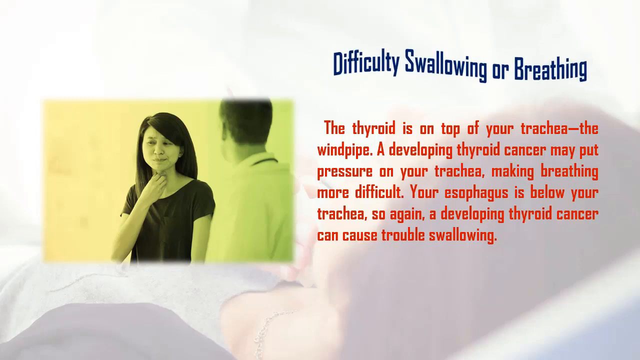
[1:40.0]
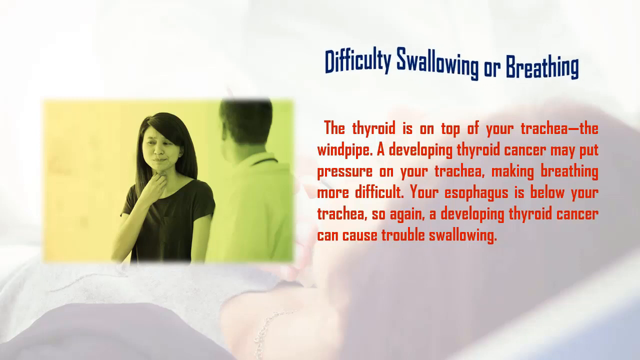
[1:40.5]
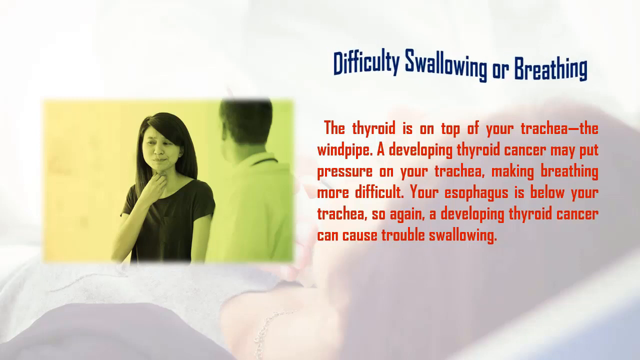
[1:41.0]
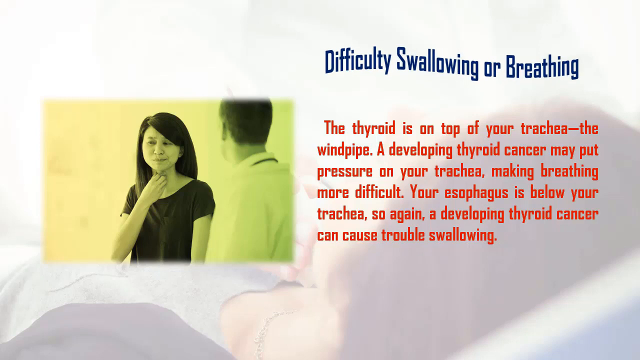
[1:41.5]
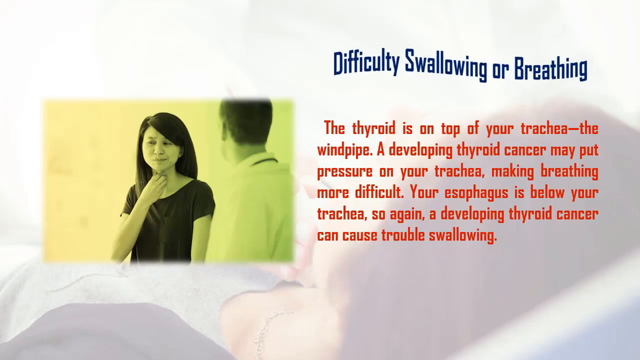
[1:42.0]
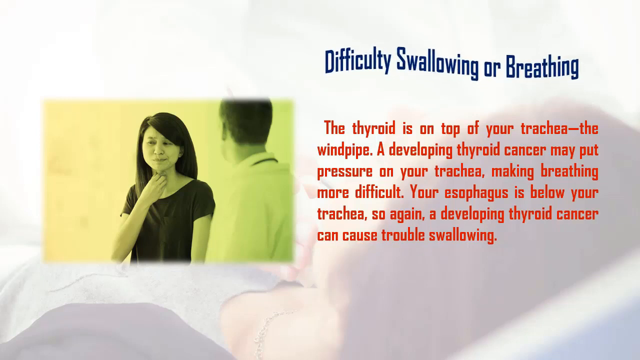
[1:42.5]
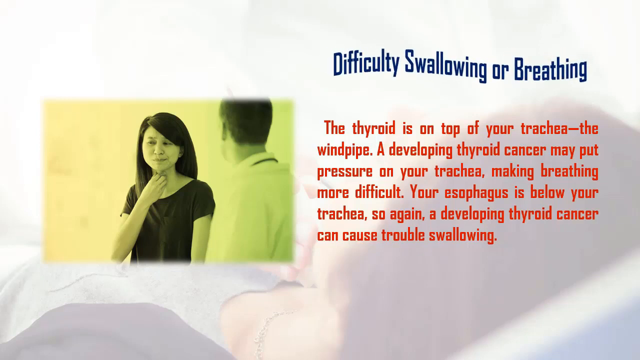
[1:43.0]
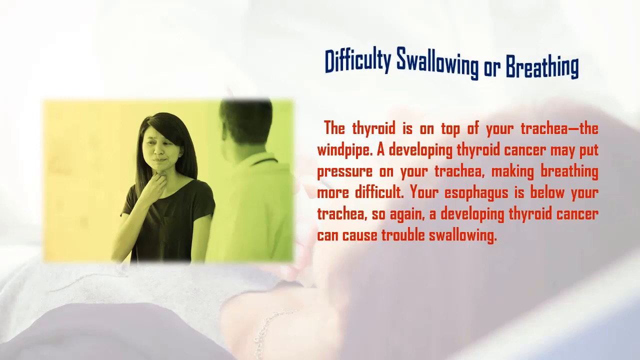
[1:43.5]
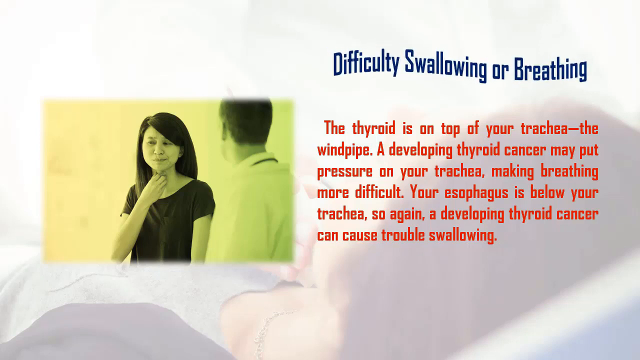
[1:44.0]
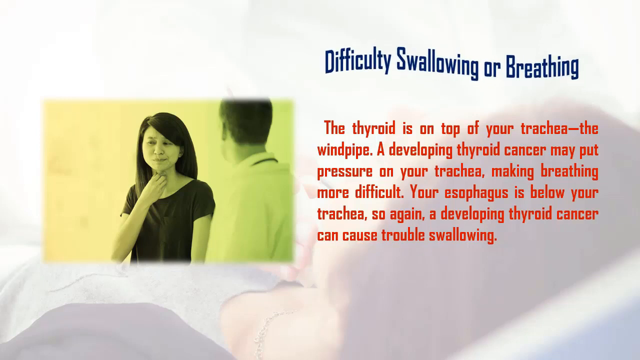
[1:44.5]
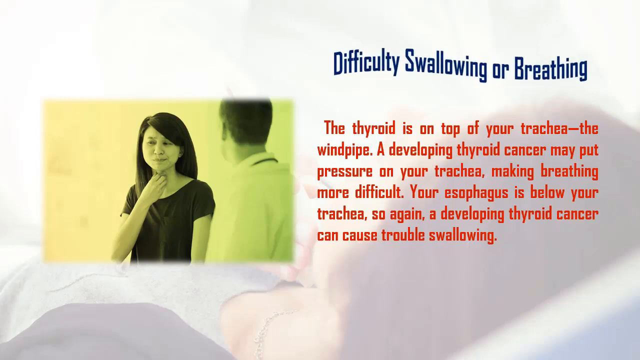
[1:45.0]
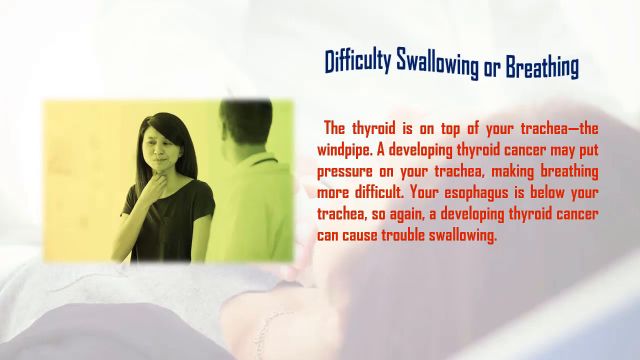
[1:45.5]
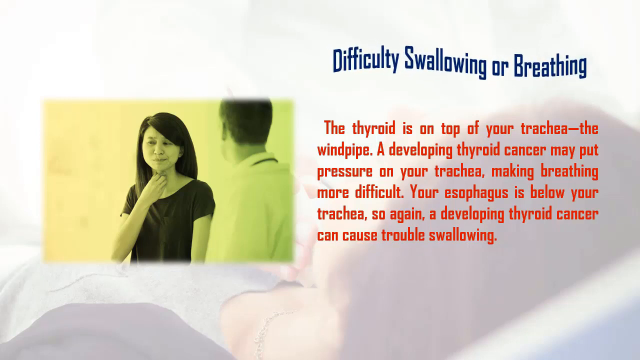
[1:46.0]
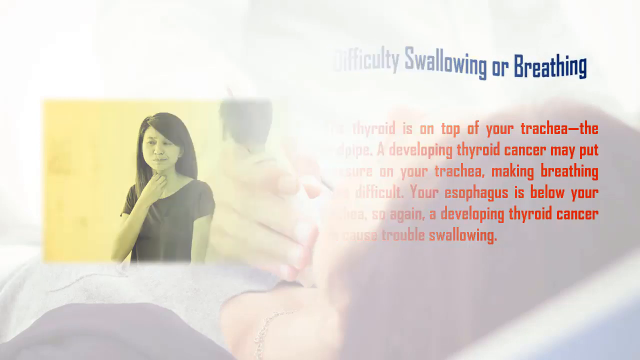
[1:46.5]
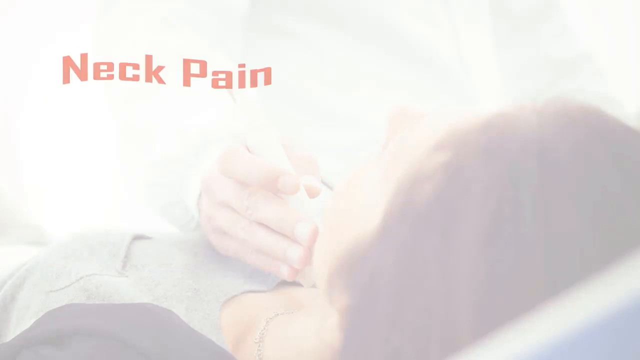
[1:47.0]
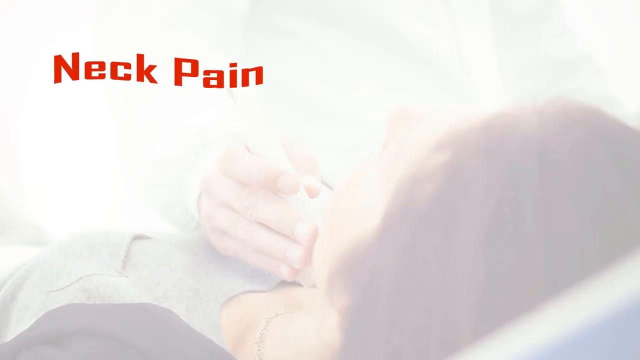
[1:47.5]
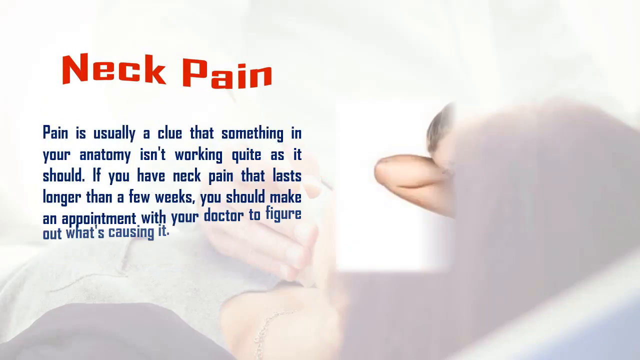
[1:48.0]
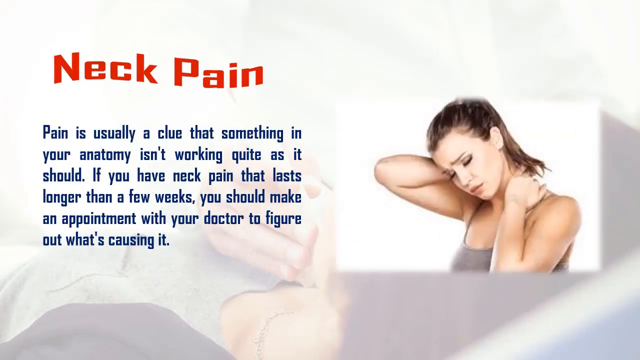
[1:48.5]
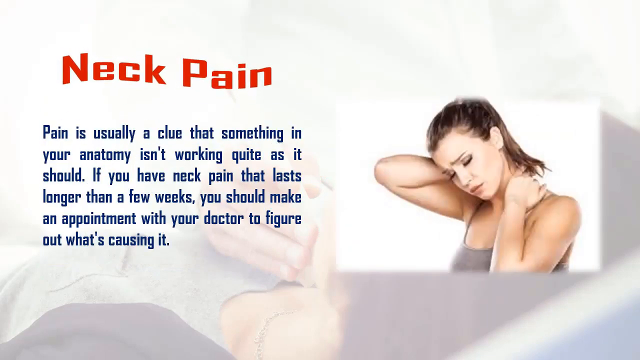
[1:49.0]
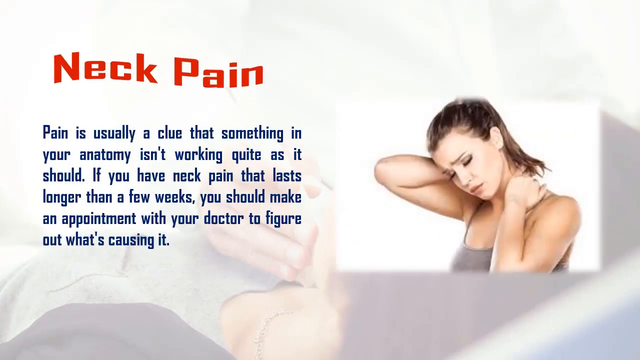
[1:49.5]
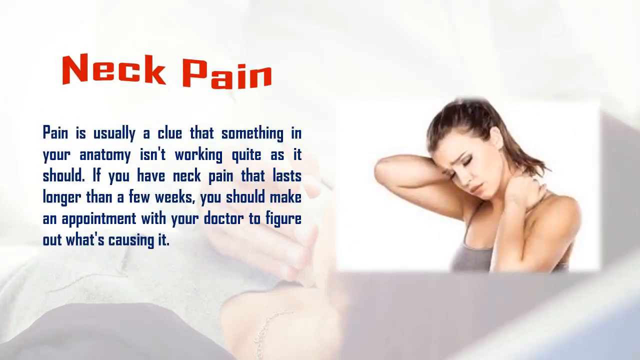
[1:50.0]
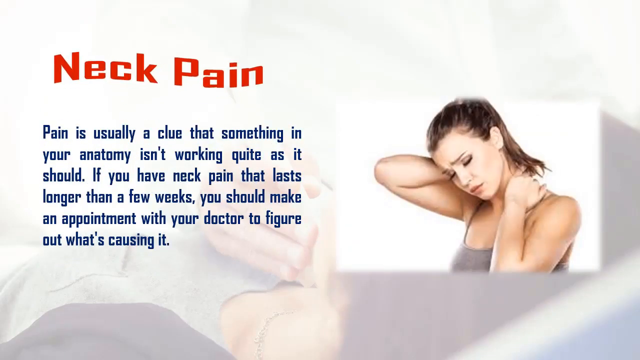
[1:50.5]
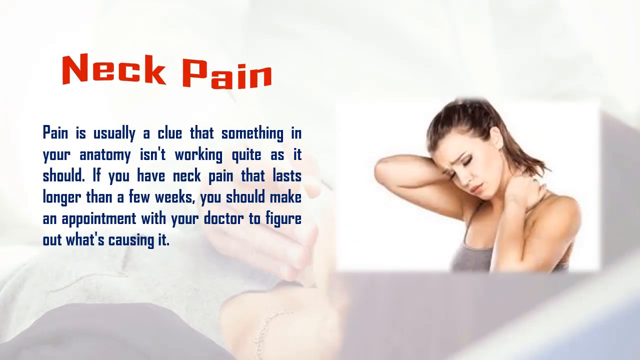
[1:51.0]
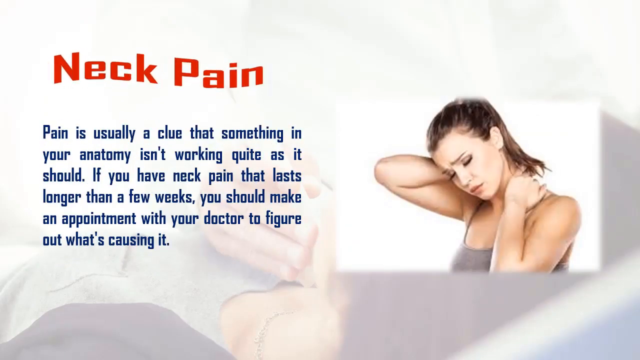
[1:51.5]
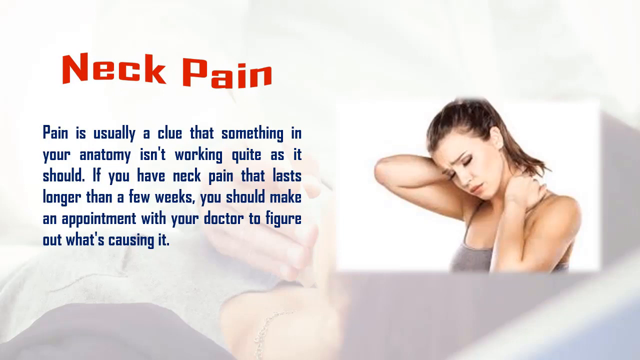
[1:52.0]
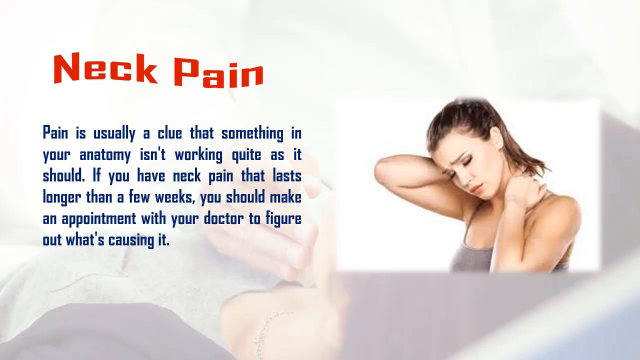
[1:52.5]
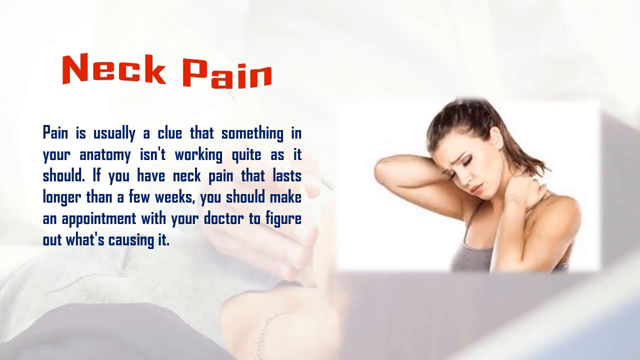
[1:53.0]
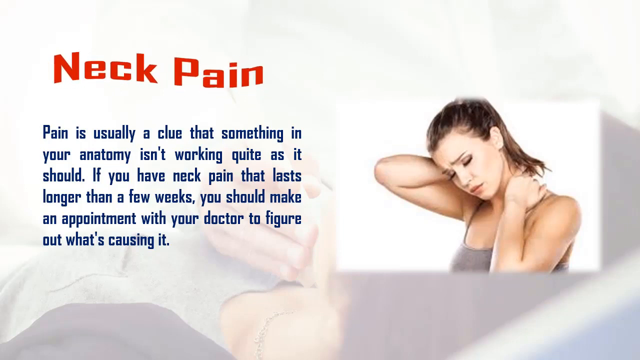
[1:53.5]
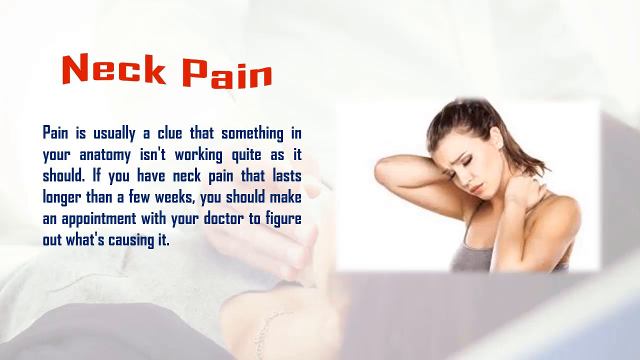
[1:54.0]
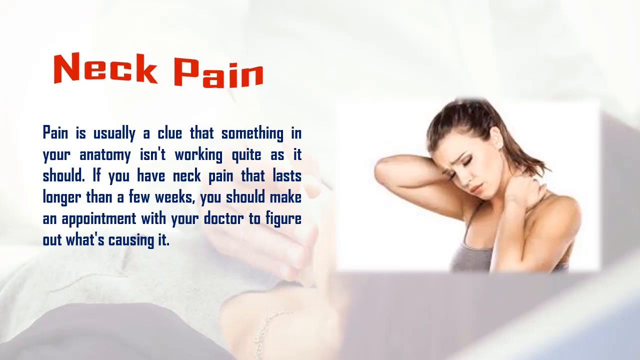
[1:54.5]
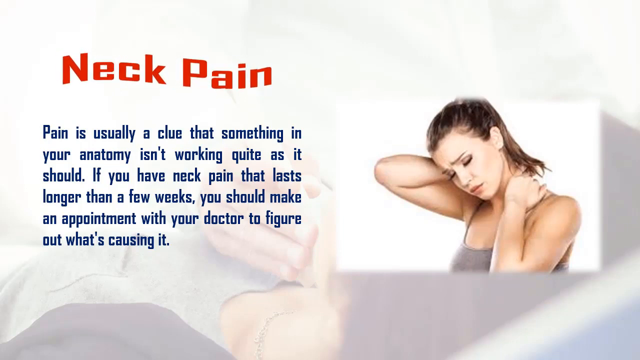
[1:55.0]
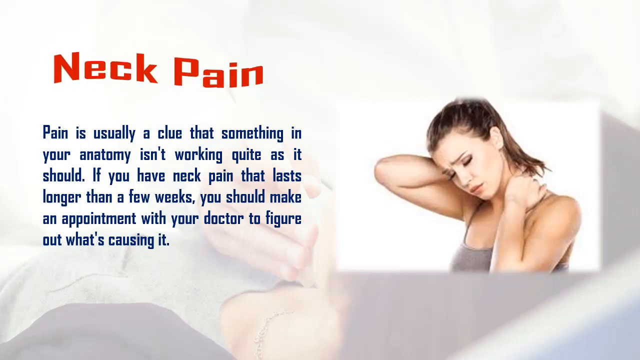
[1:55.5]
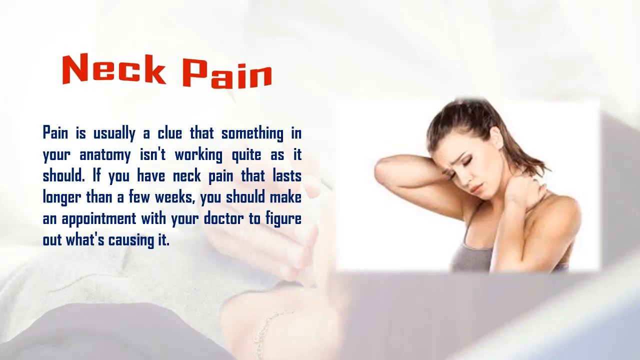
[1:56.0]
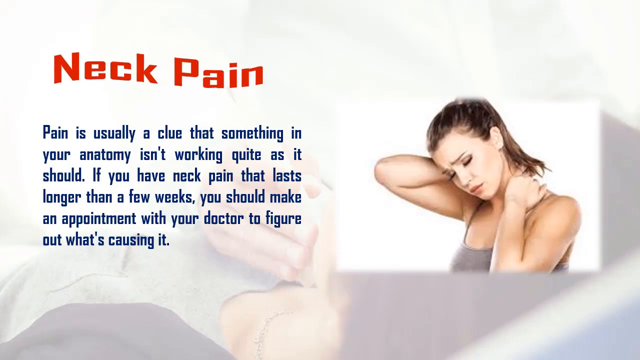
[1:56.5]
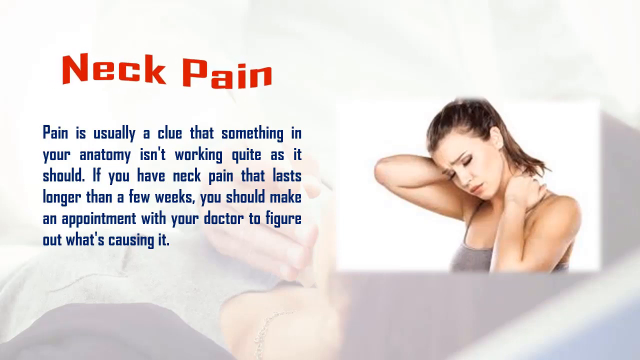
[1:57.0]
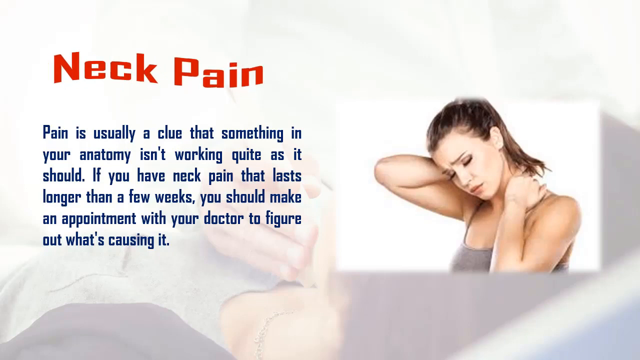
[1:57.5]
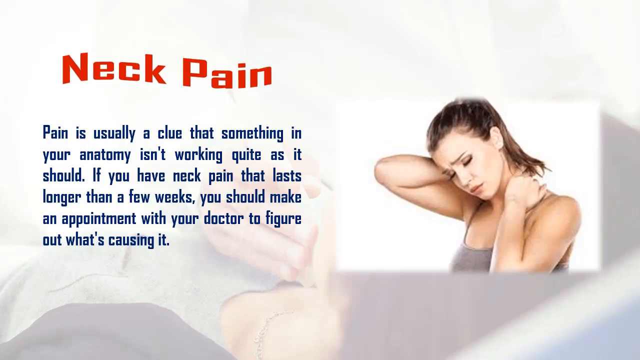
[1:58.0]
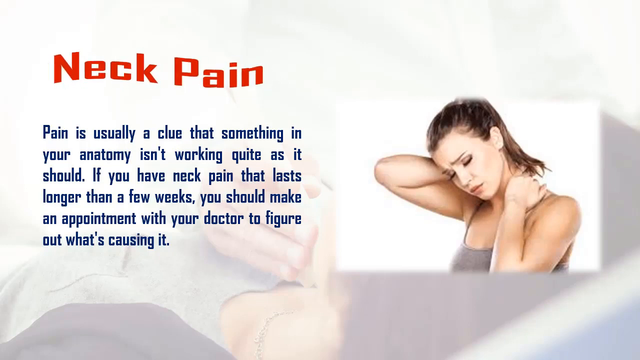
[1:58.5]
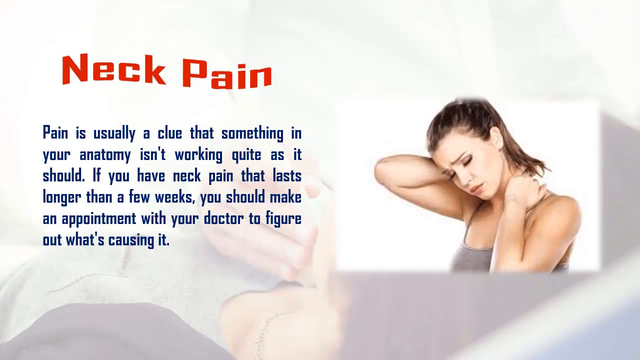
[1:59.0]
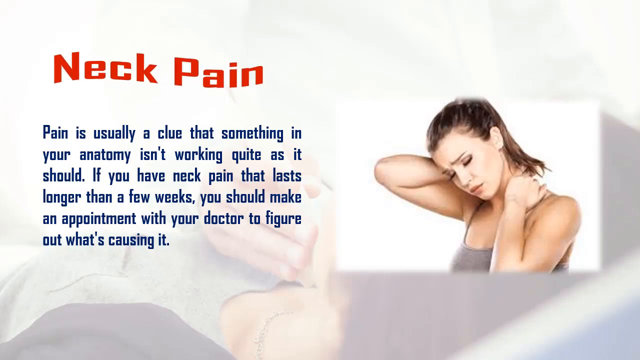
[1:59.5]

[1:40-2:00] The Disease Facts video about thyroid cancer is made of slides. It shows the "hoarse voice" slide, reading "your thyroid gland sits just above the larynx a Thyroid nodule may be pressing on the voice box causing hoarseness or voice changes that This is an uncommon way that thyroid cancer is detected." The next slide says "Neck pain" in red, then in blue: "Pain is usually a clue that something in your anatomy isn't working quite right Or quite as it should if you have neck pain that lasts longer than a few weeks You should make an appointment with your doctor to figure out what's causing it." Behind this text, in a very faint picture, is a woman lying on a bed touching her neck with her right hand. On the right-hand side is a white woman with brown hair in a ponytail, wearing a gray tank top; she does not look very happy. Her head is bent down a little, her left hand is on the back of her neck with the elbow down, and her right arm, with the elbow up, is also on her neck.